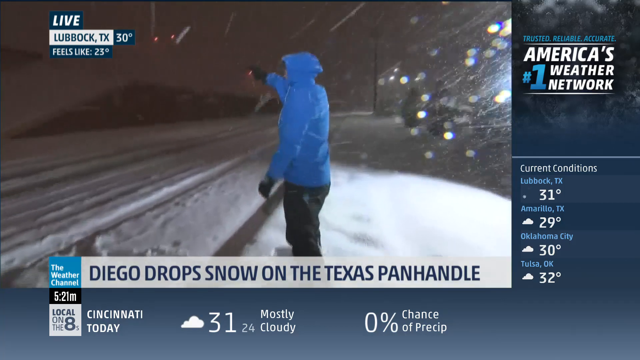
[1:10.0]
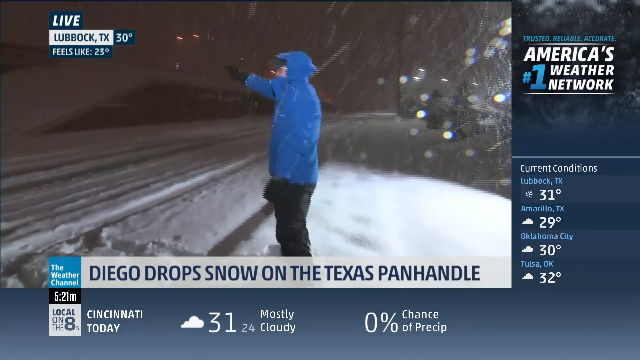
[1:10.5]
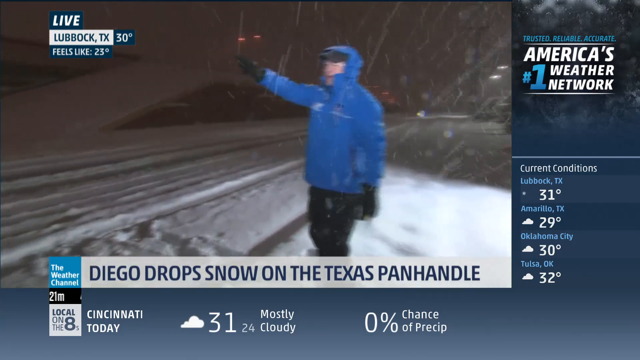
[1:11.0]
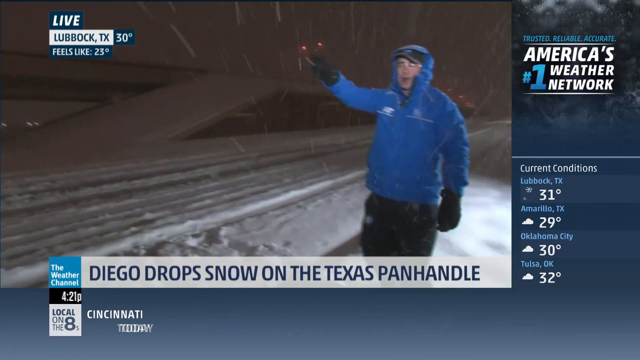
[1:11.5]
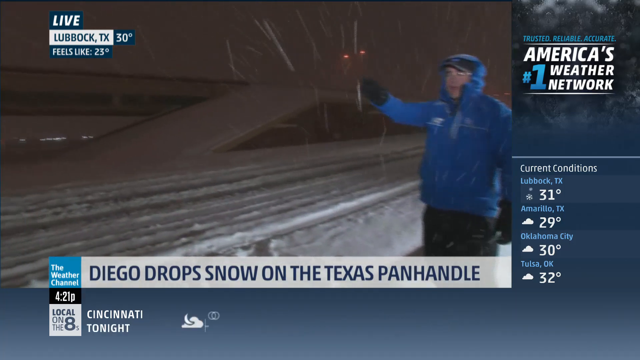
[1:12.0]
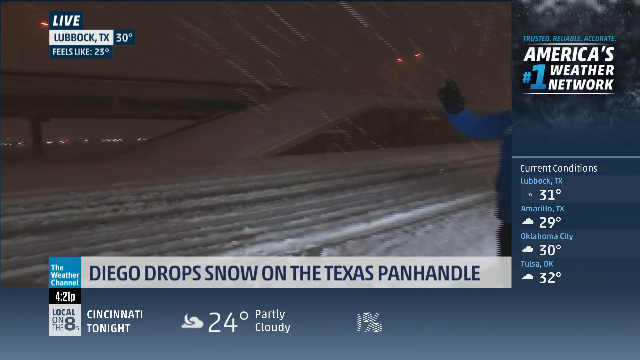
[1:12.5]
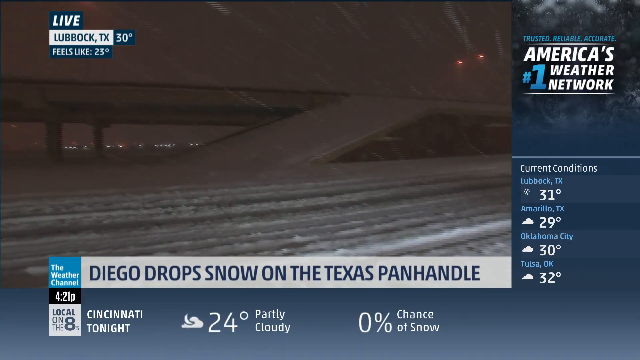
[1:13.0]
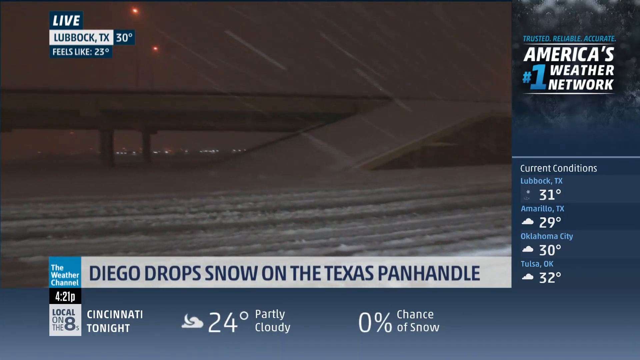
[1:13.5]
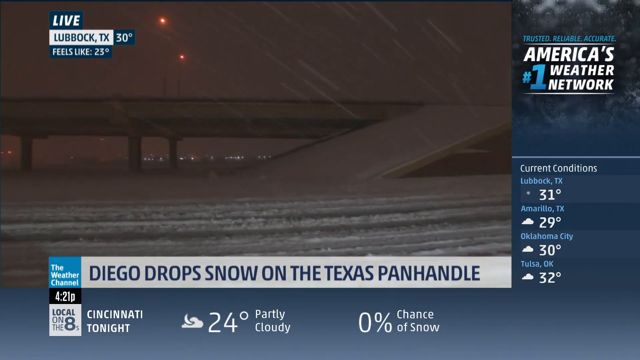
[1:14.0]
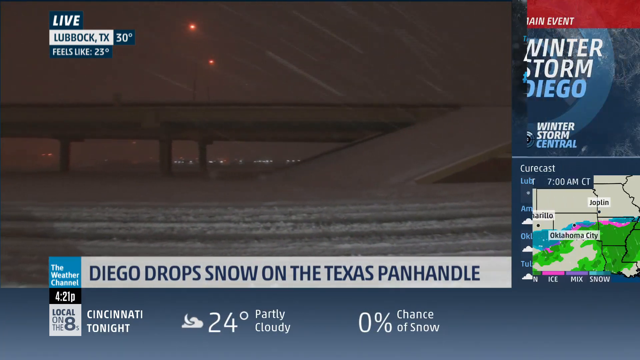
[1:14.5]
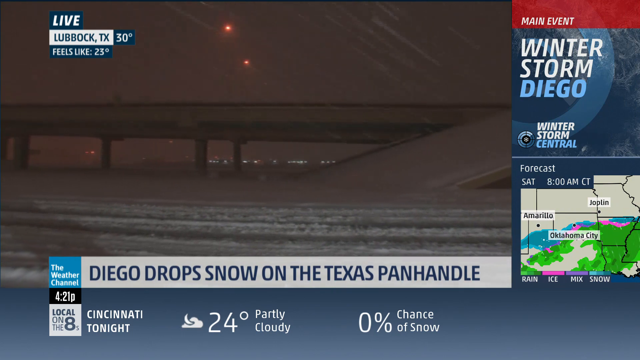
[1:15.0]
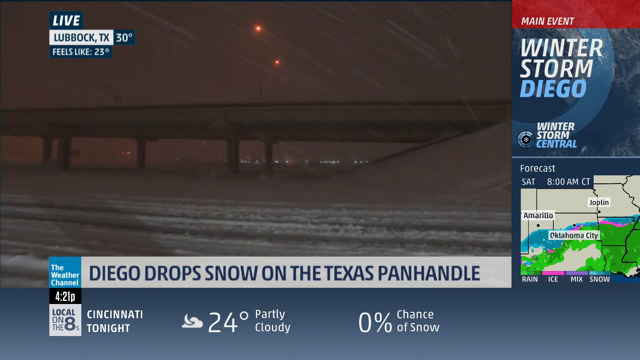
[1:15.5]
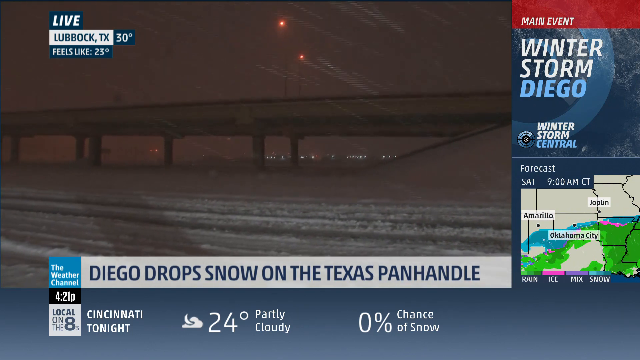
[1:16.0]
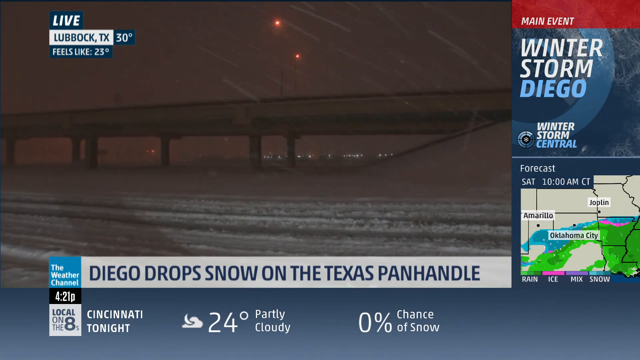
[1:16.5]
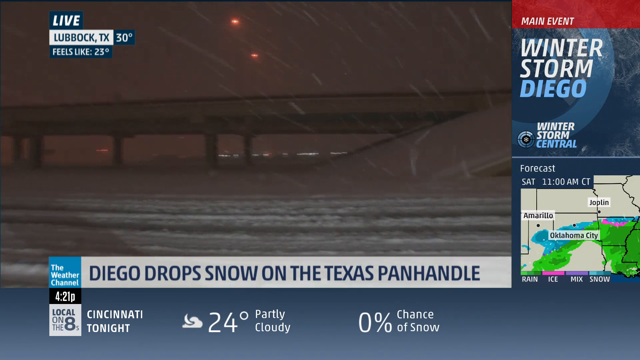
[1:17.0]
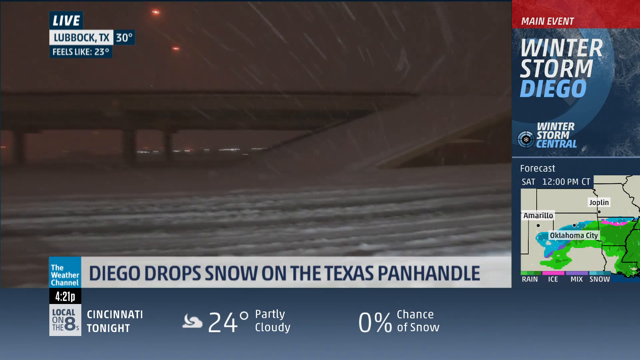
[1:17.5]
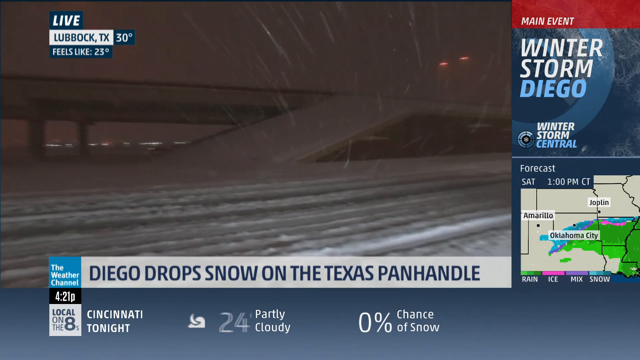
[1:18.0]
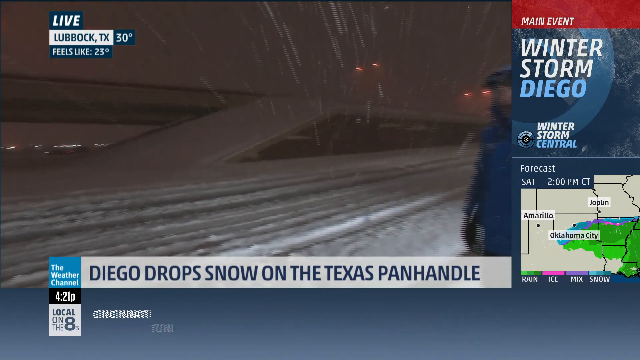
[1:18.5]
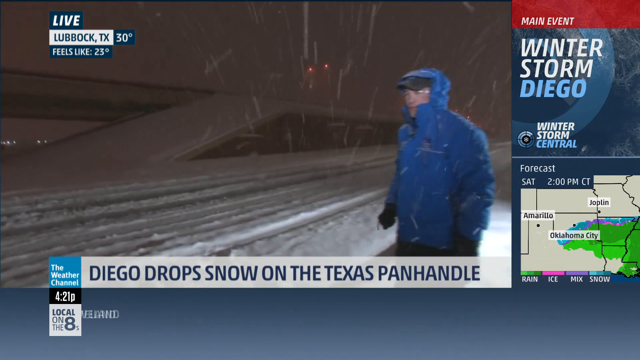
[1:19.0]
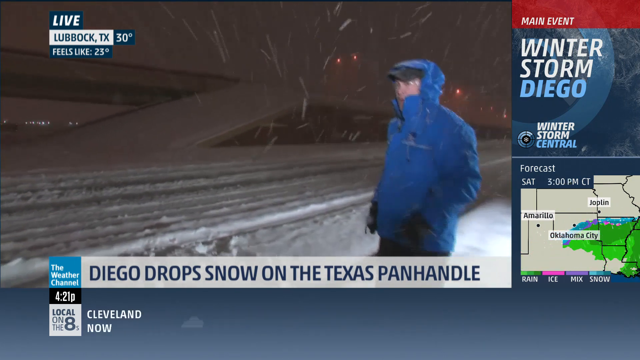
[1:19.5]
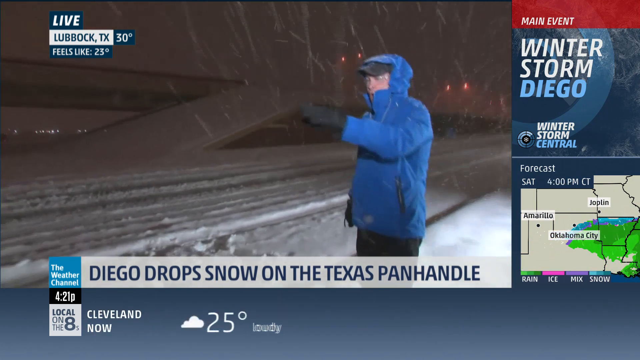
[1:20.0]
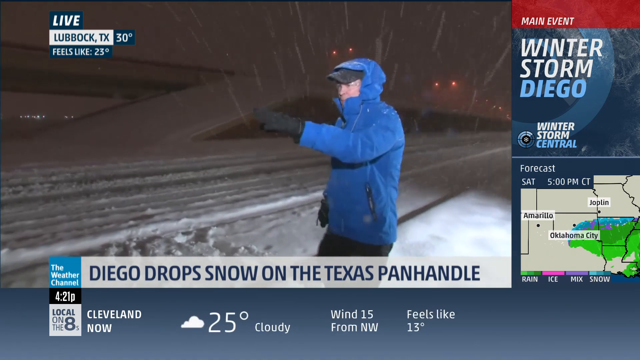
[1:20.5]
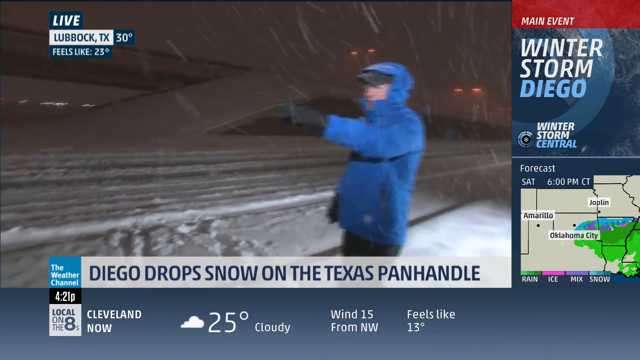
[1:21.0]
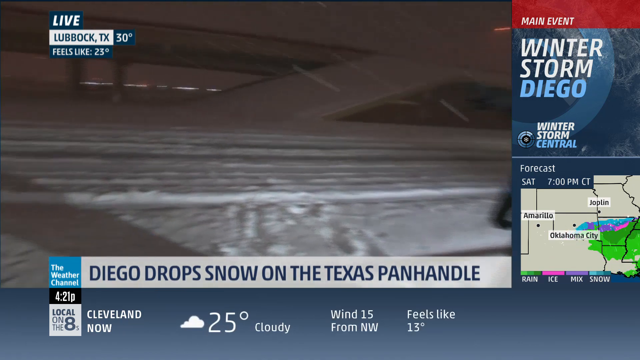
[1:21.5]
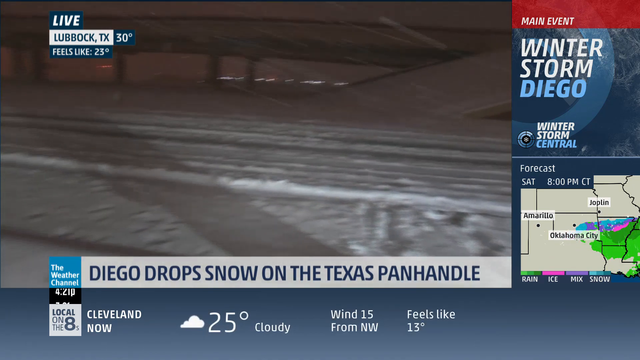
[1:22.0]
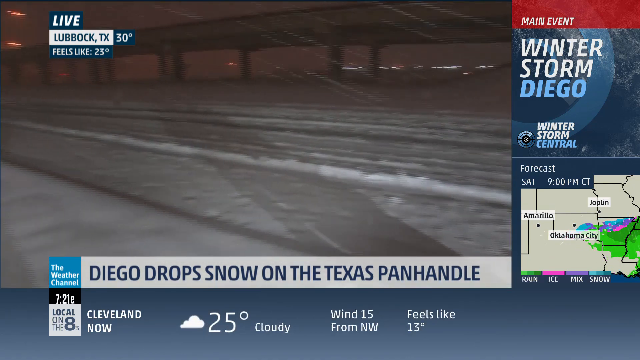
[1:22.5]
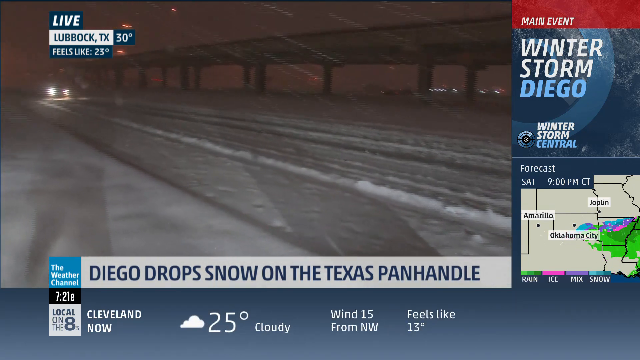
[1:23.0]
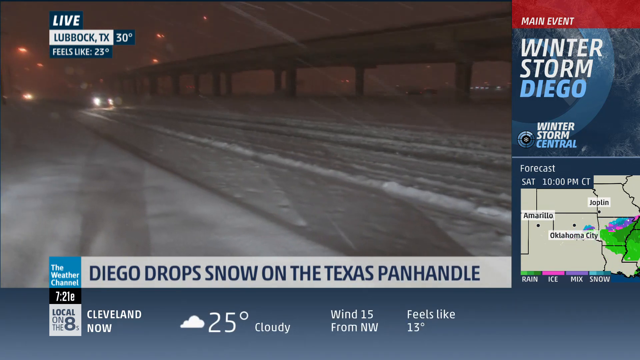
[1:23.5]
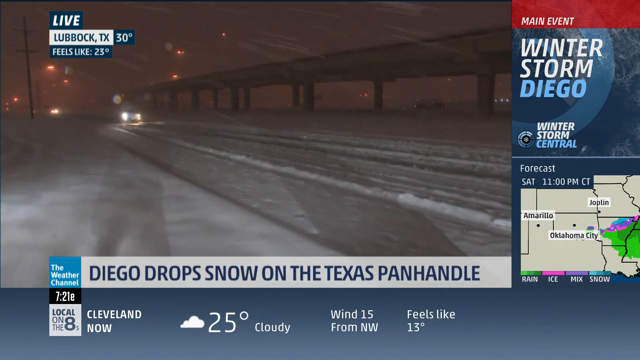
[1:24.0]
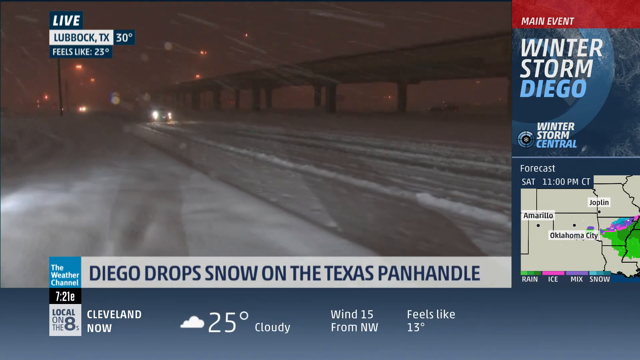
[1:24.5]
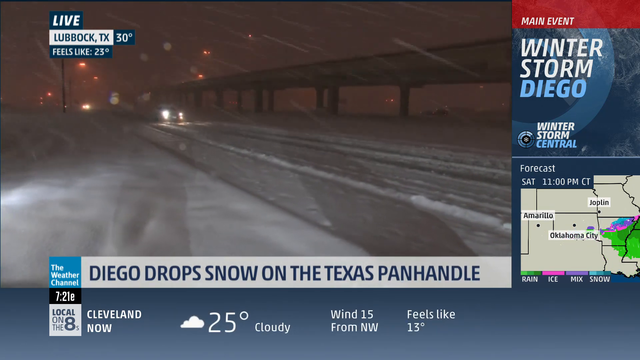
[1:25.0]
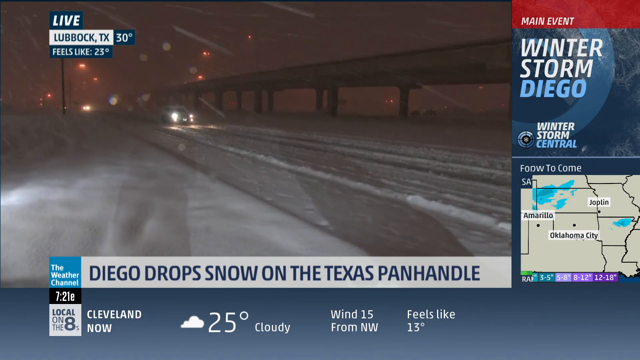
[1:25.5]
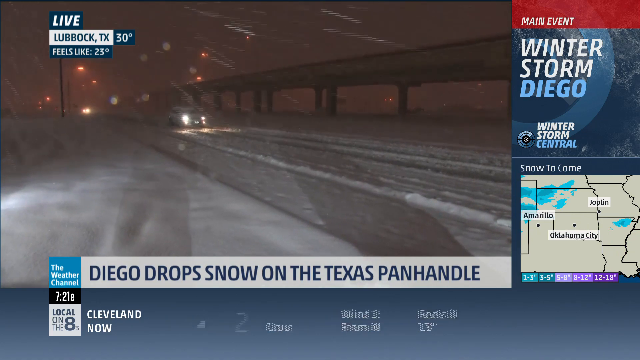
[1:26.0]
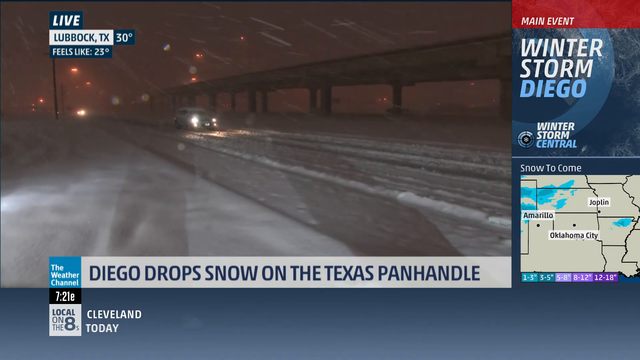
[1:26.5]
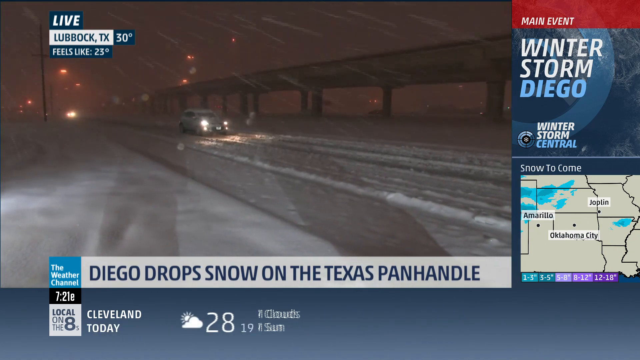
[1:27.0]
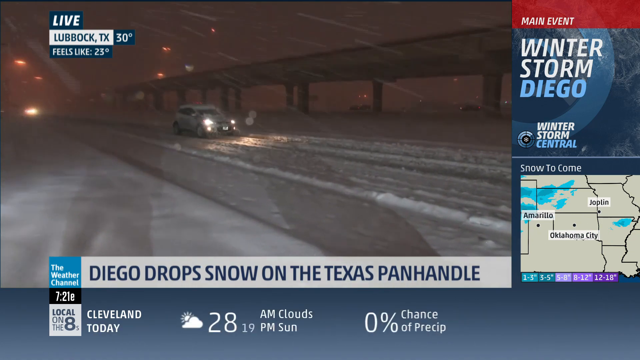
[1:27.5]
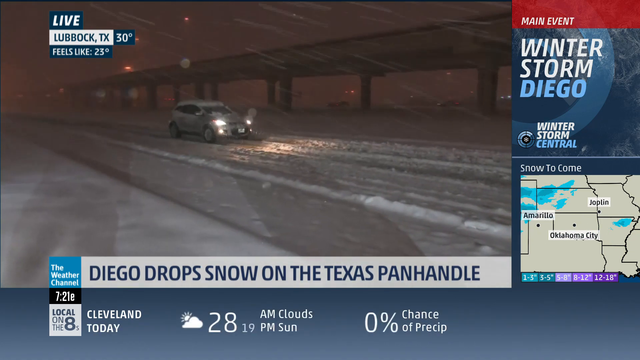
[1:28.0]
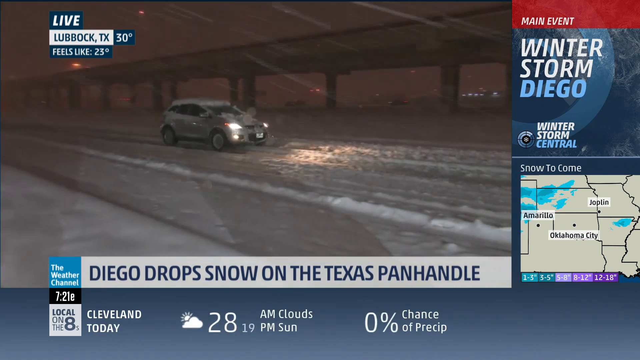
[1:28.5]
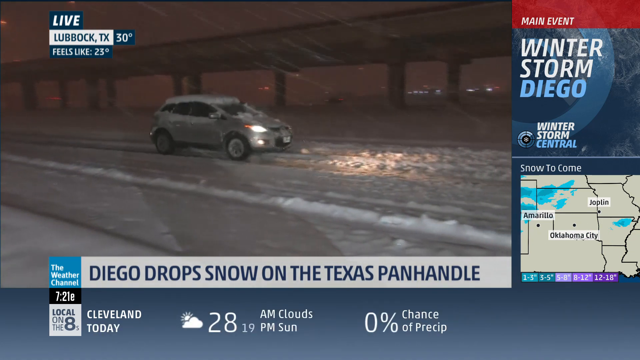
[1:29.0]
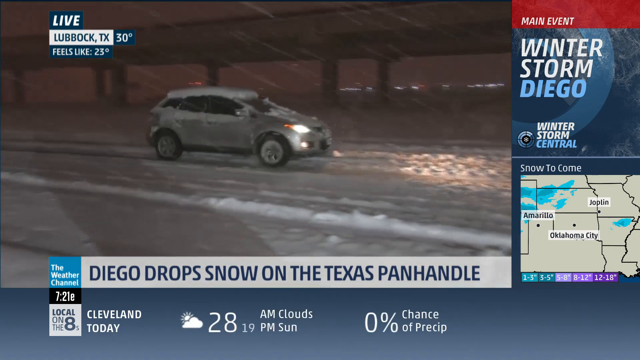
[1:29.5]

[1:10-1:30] The live broadcast from Lubbock, TX continues, showing 30 degrees, feeling like 23 degrees, on the Weather Channel, America's number one weather network, trusted, reliable and accurate. The story is "diego drops snow on the Texas Panhandle." The area and the trees are covered in snow. The newsreader walks around with the cameraman, showing what is happening in the area. Cars pass along the road, which is covered in snow everywhere, and the cars are also covered in snow. The newsreader struggles to walk through the snow as he moves around. The time is around 5 to 6 a.m.